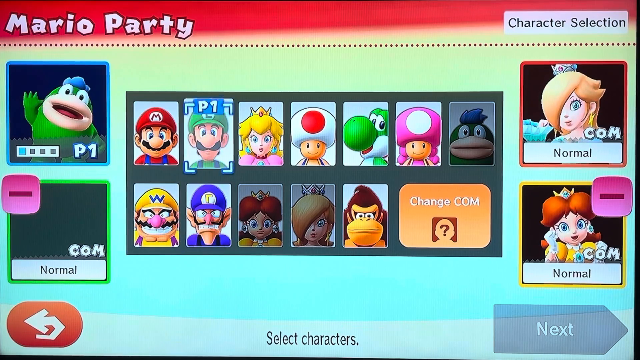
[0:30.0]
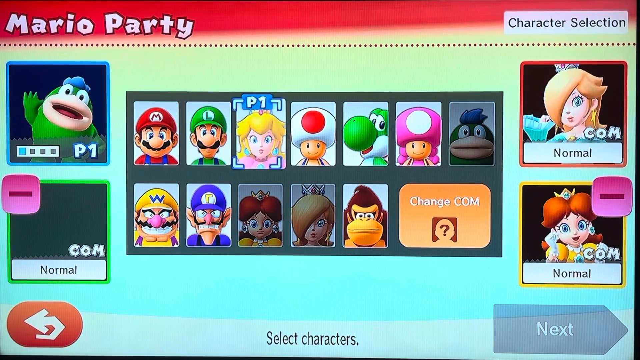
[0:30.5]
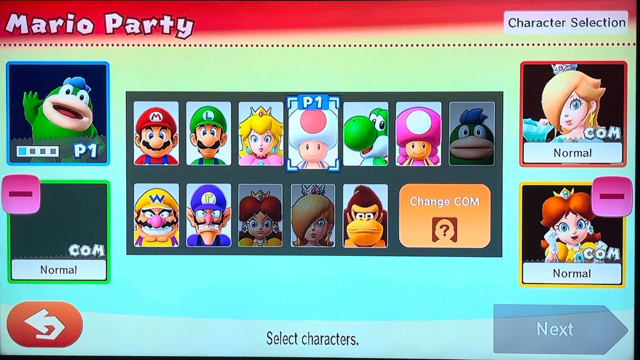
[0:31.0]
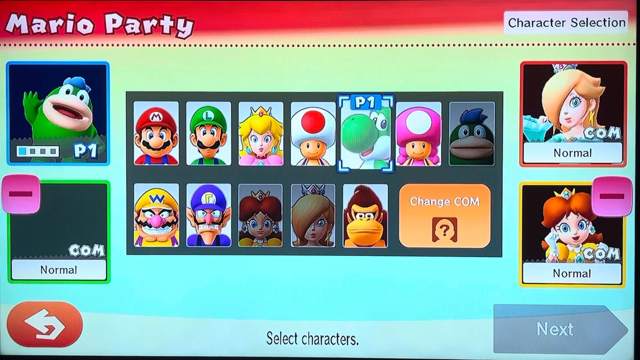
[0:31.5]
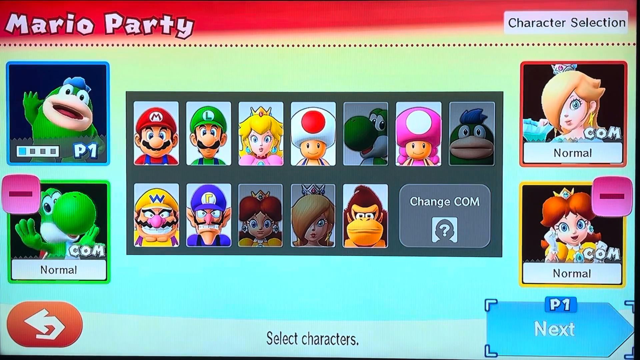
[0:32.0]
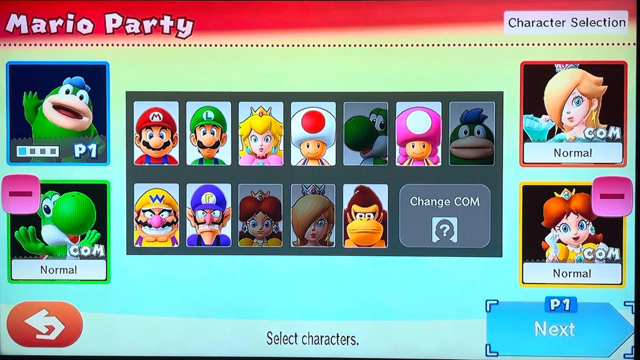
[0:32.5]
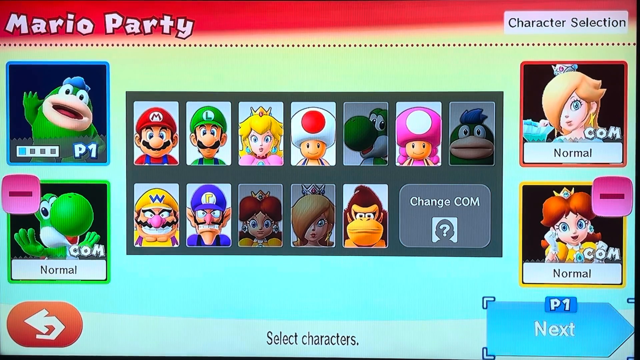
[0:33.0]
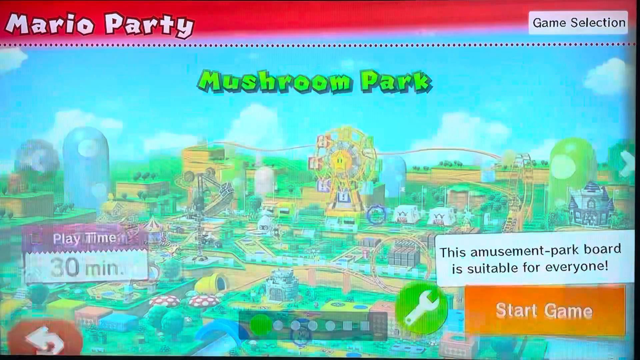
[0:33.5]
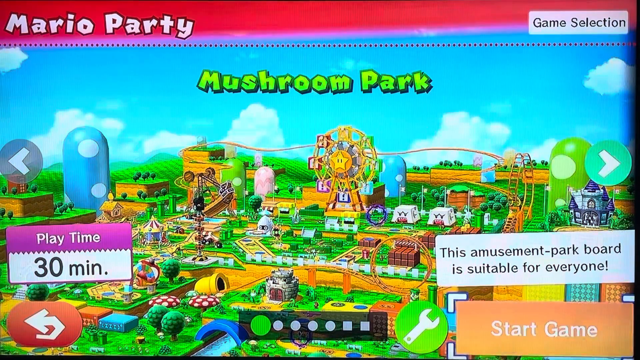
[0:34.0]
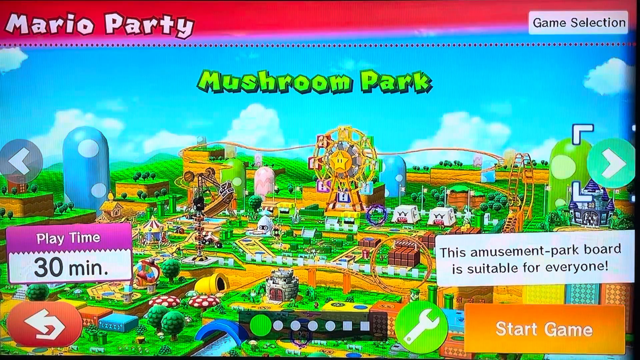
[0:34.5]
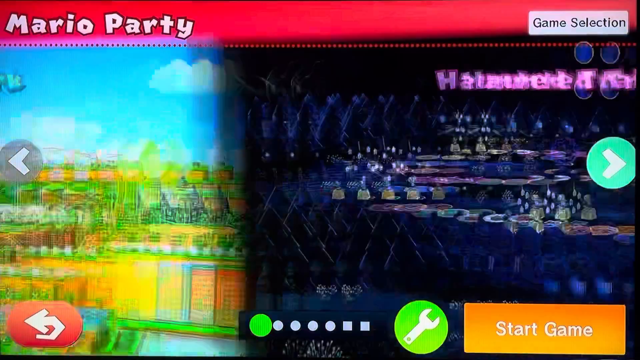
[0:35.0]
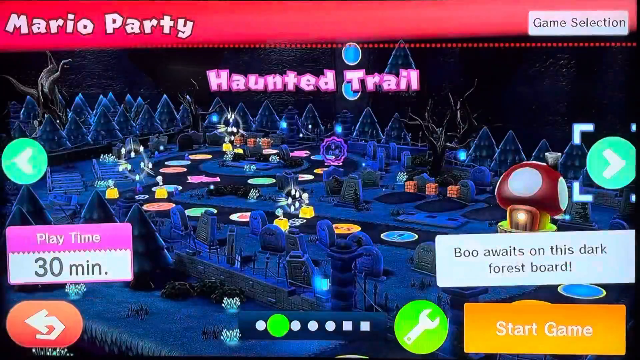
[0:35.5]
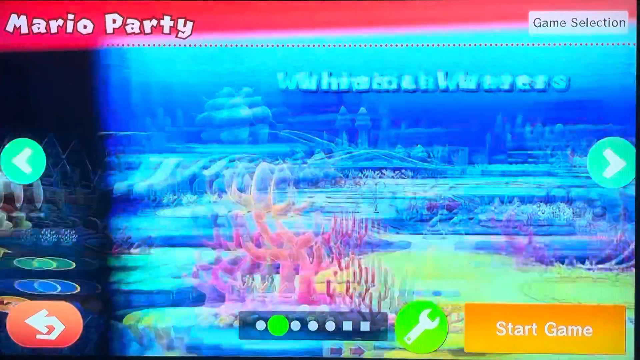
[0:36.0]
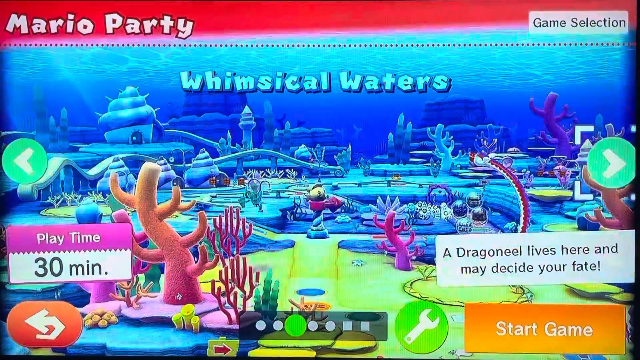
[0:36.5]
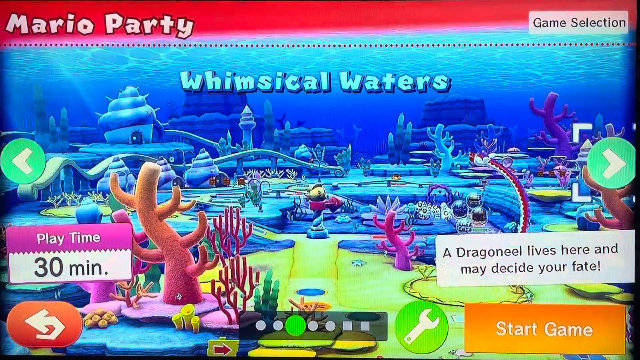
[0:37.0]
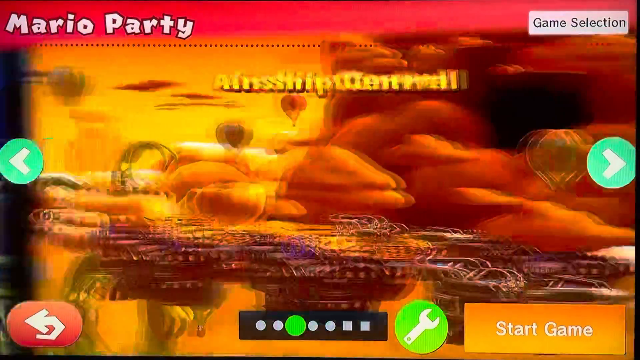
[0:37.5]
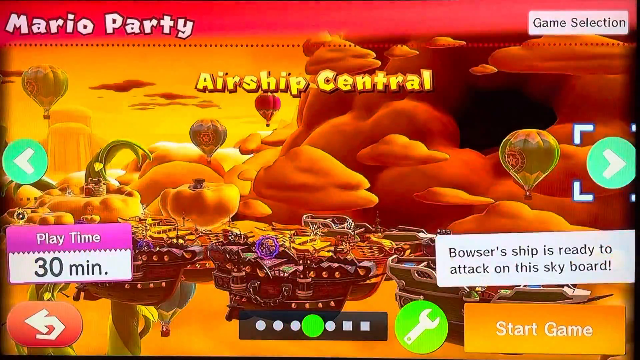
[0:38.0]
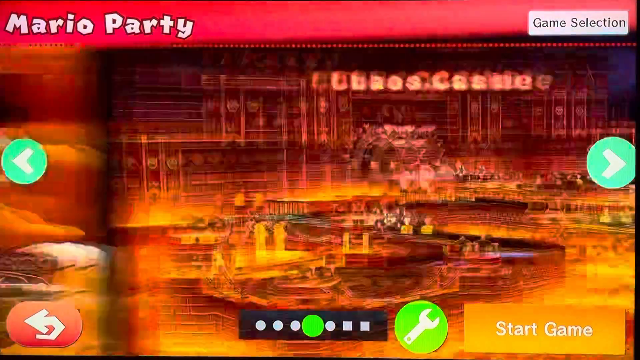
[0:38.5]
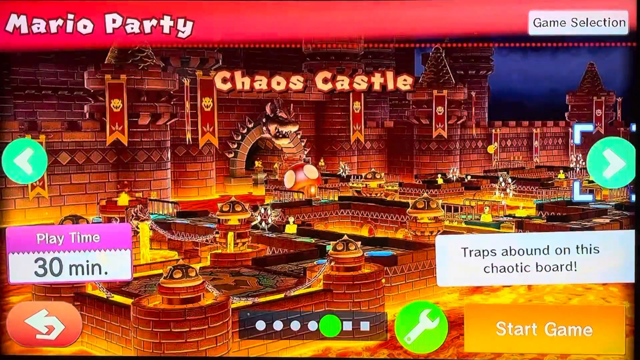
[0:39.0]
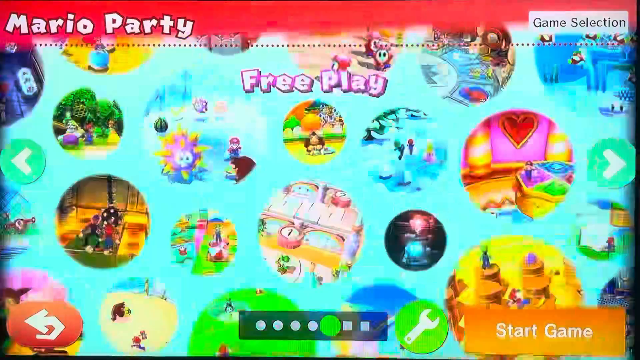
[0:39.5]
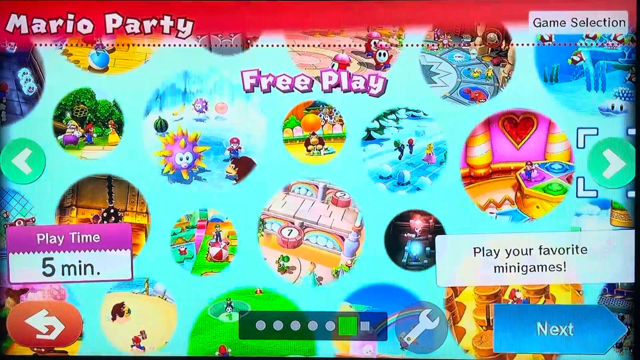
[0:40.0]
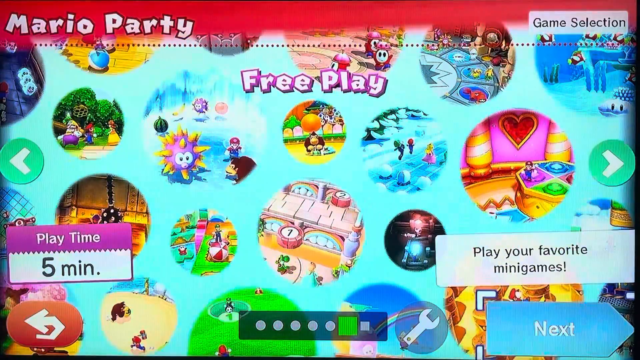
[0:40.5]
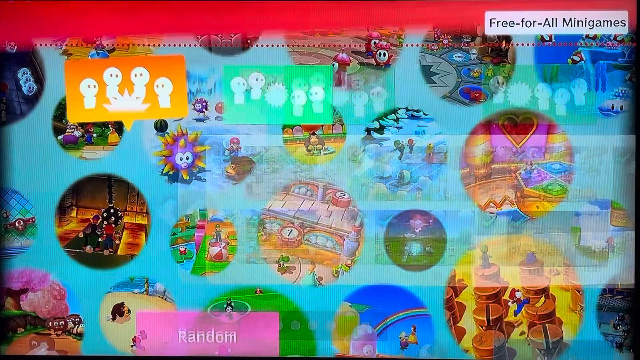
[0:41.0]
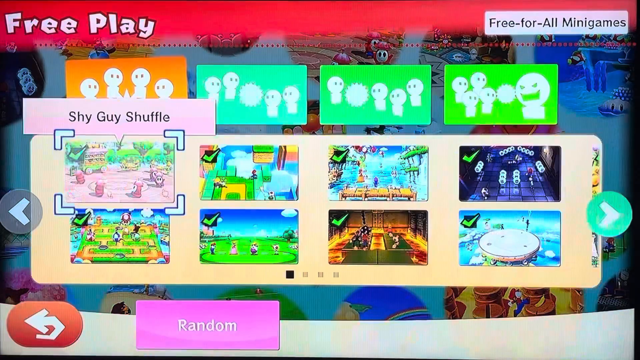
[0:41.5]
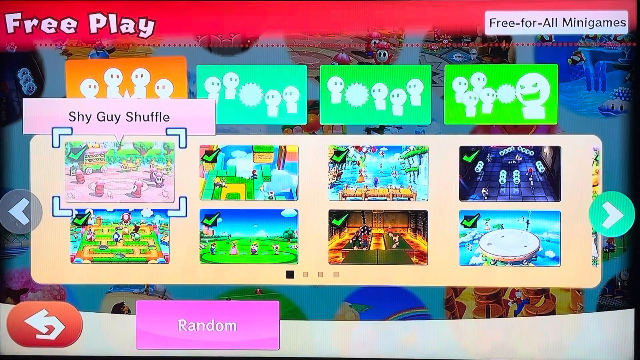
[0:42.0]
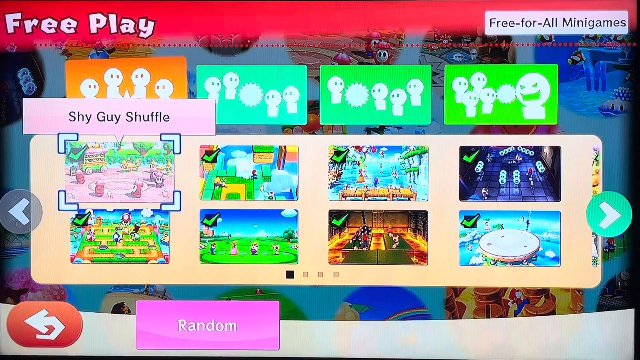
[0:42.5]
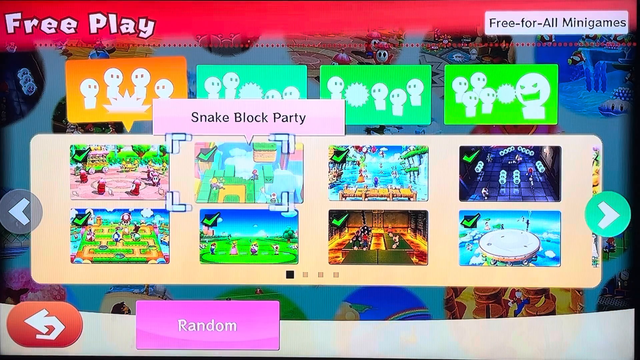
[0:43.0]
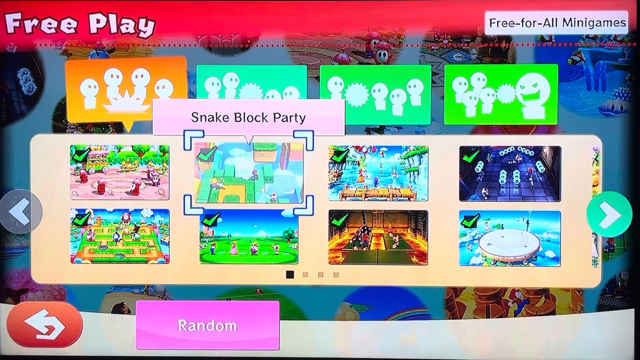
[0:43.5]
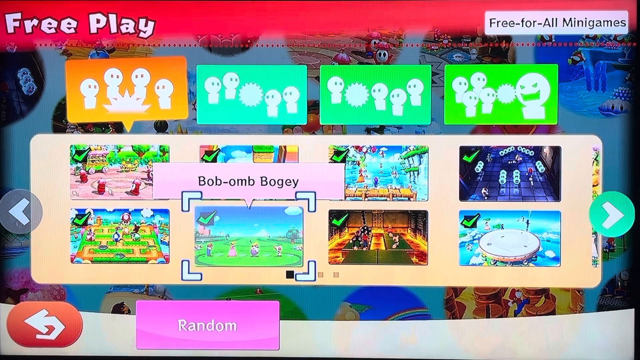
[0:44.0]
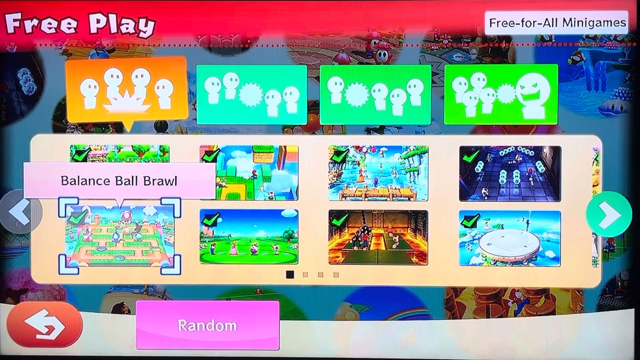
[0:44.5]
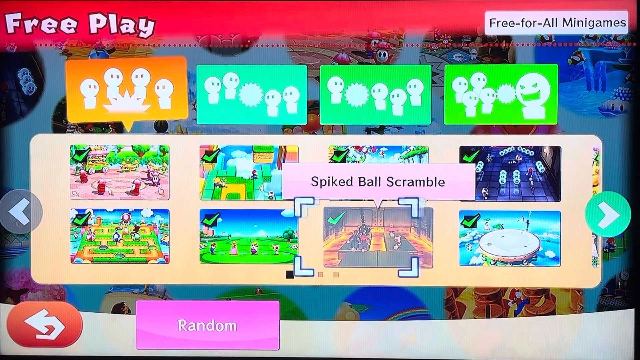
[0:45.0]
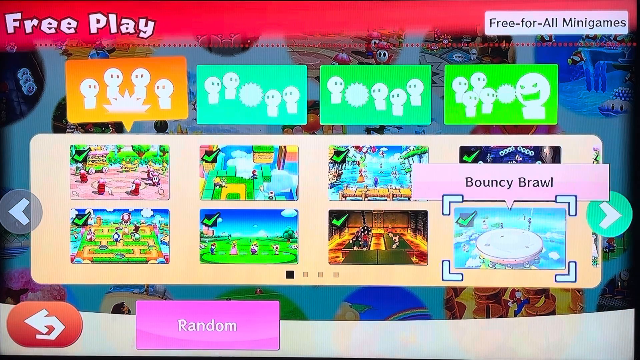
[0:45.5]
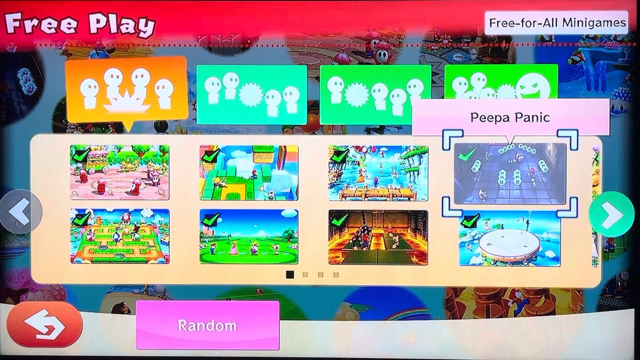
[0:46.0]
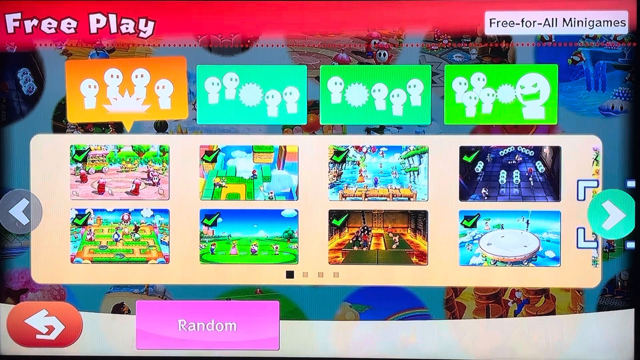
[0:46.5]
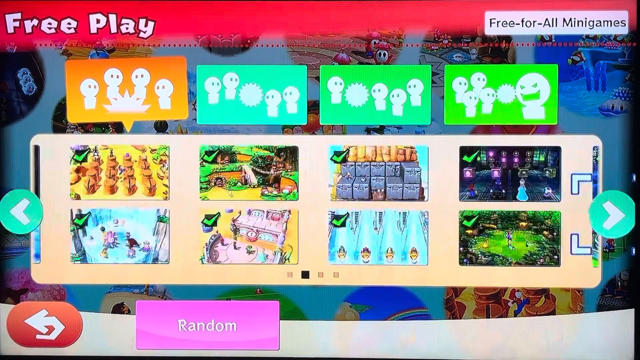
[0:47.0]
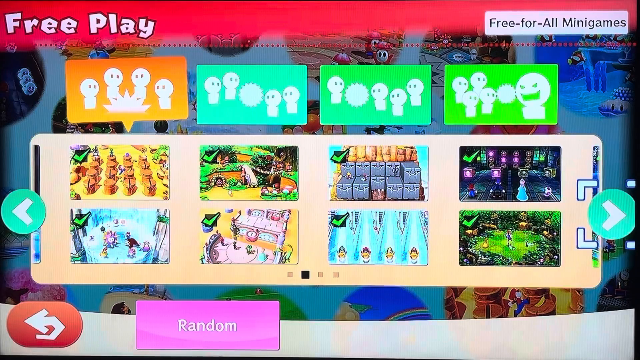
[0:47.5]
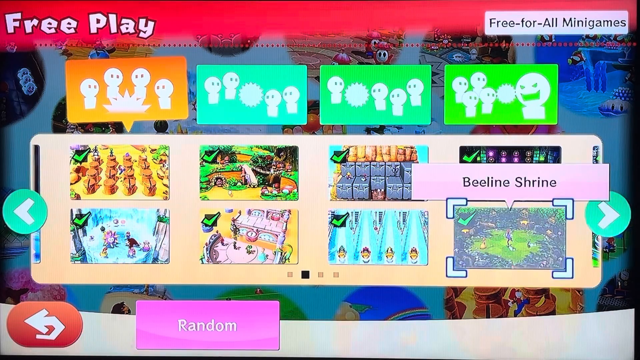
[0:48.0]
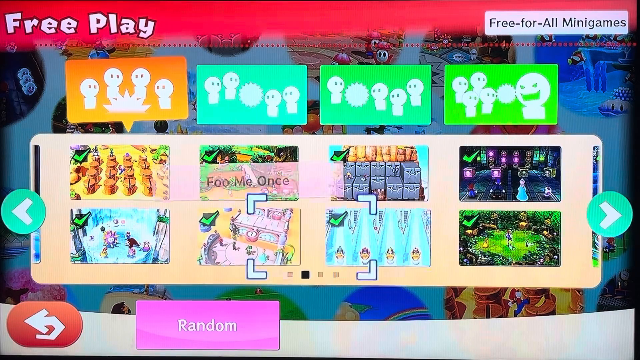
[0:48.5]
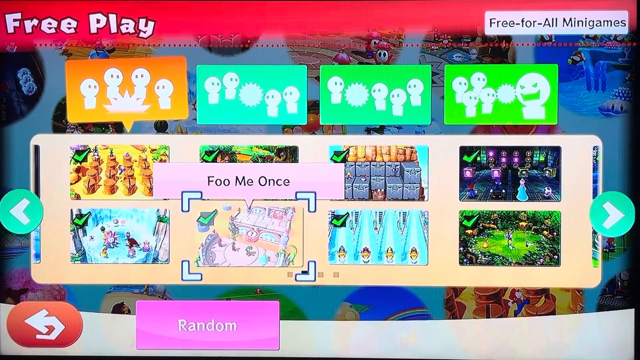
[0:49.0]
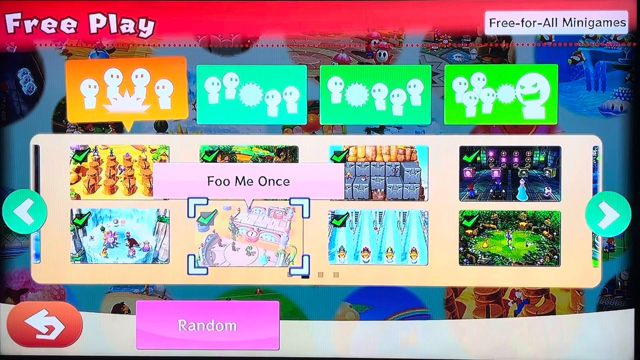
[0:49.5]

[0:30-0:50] The characters have been chosen: Peach, apparently a different version of Peach; Yoshi; Daisy; and a character that looks like a duck or a penguin. The player moves on to the map selection and scrolls through the different maps without picking one. They are classic Mario maps, with Bowser and Lightning Mushrooms among them.